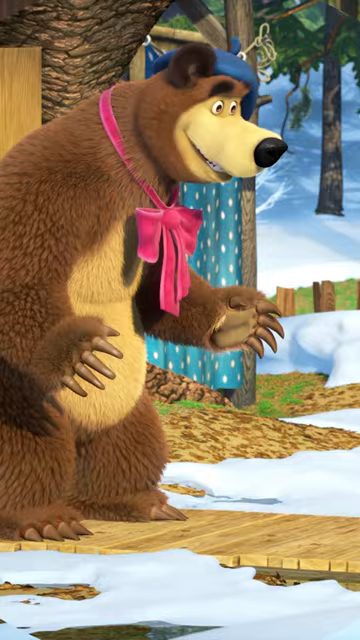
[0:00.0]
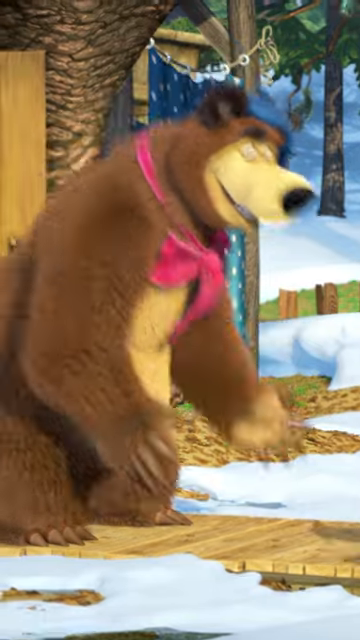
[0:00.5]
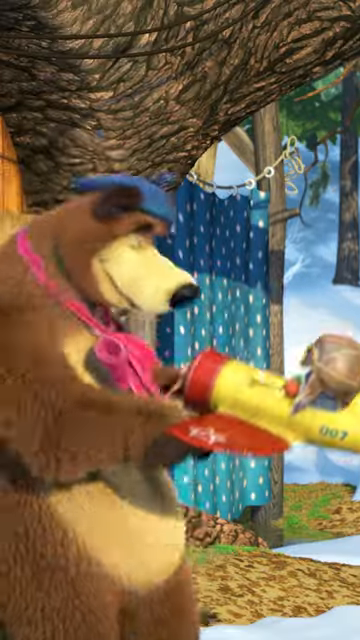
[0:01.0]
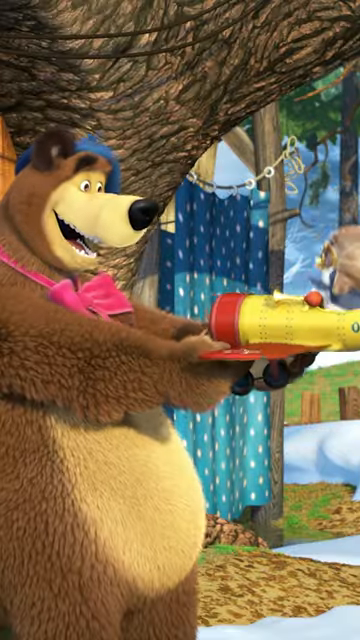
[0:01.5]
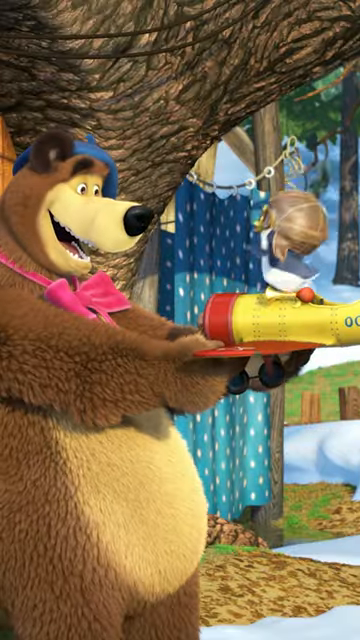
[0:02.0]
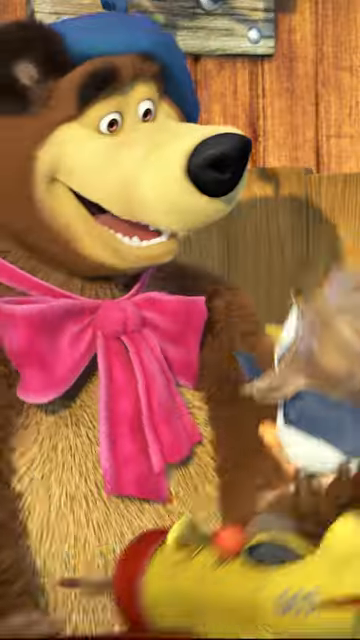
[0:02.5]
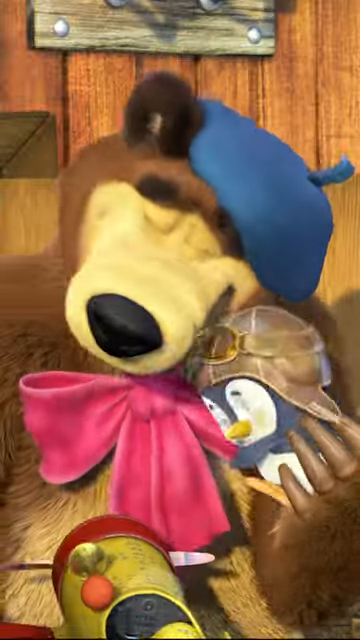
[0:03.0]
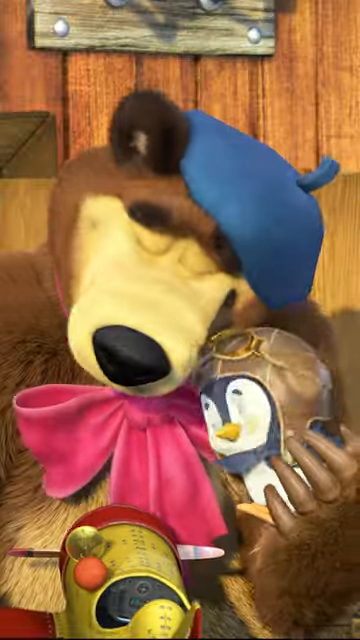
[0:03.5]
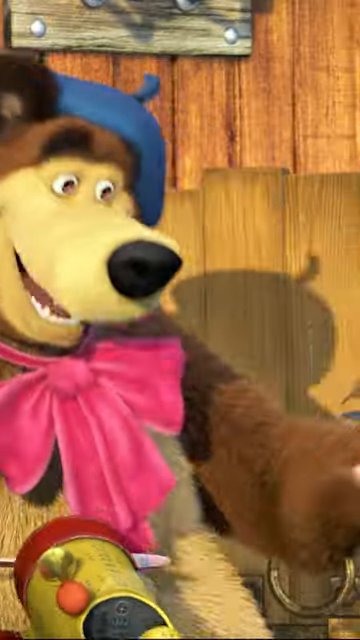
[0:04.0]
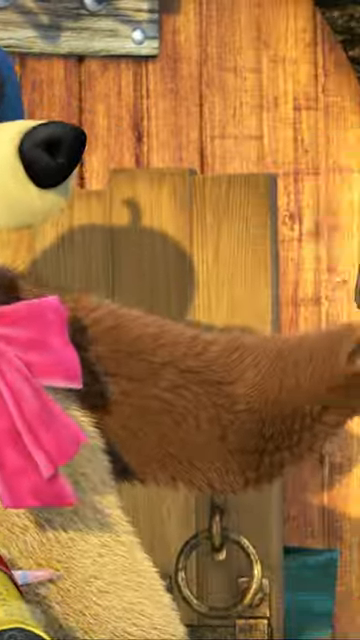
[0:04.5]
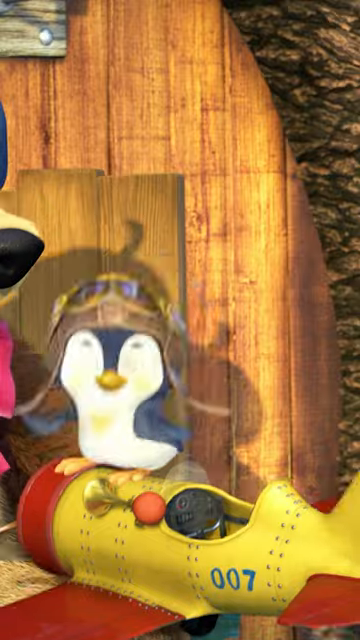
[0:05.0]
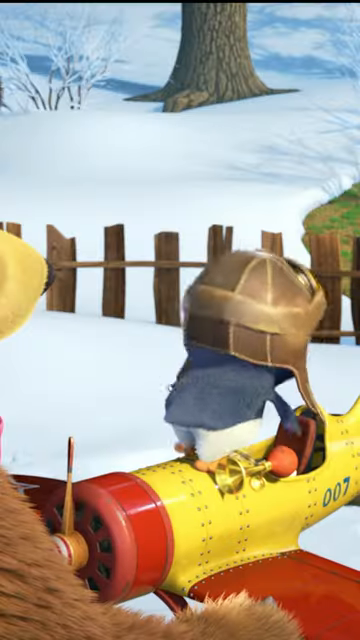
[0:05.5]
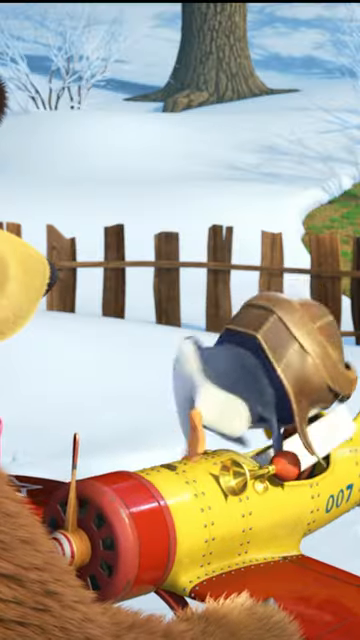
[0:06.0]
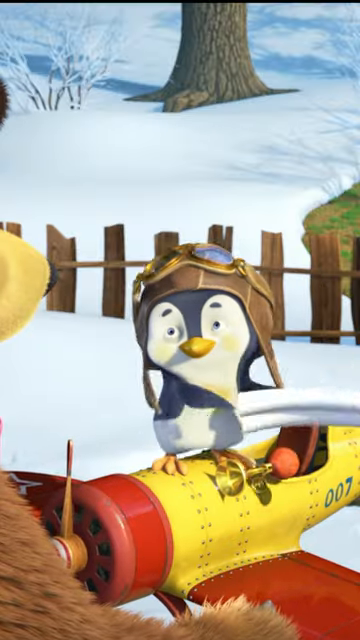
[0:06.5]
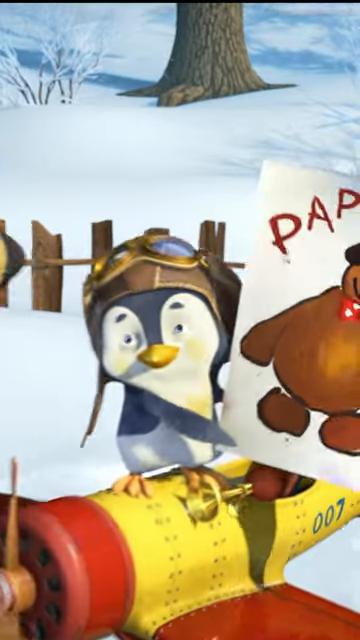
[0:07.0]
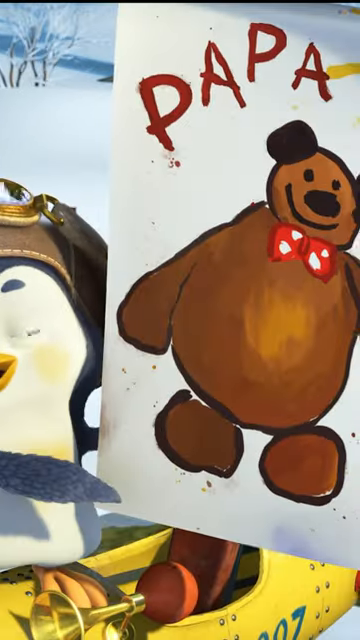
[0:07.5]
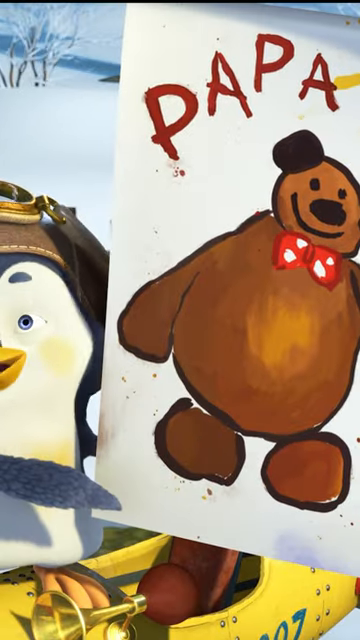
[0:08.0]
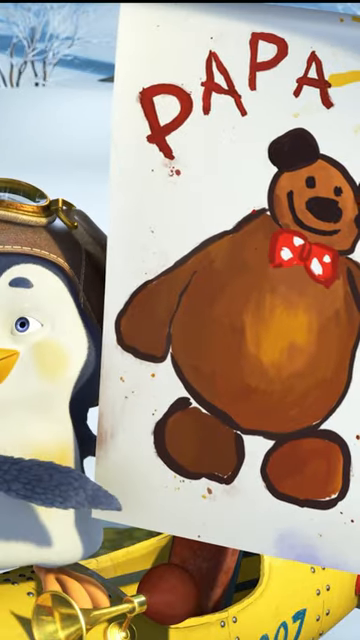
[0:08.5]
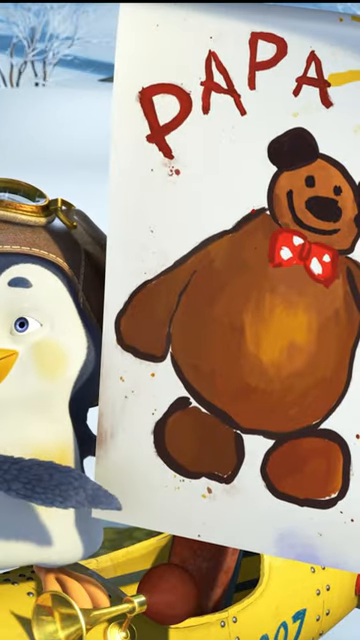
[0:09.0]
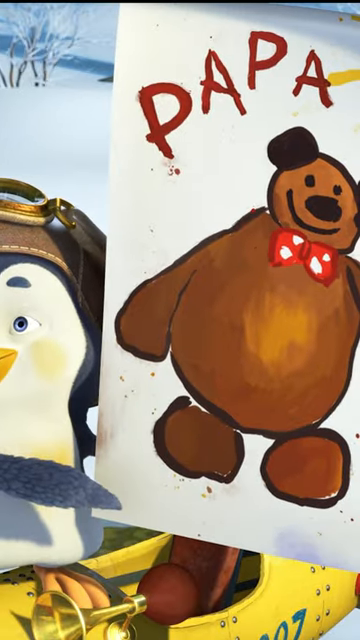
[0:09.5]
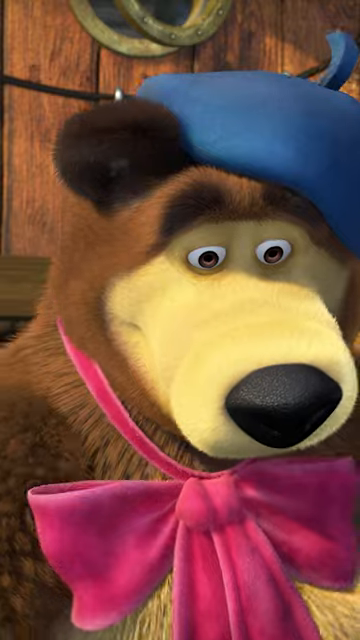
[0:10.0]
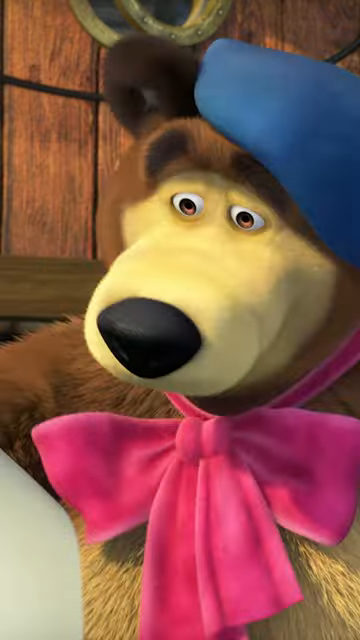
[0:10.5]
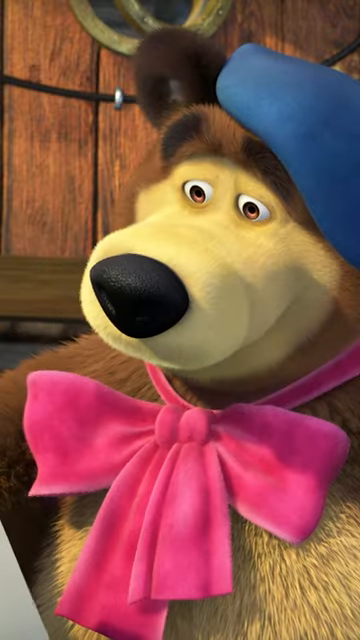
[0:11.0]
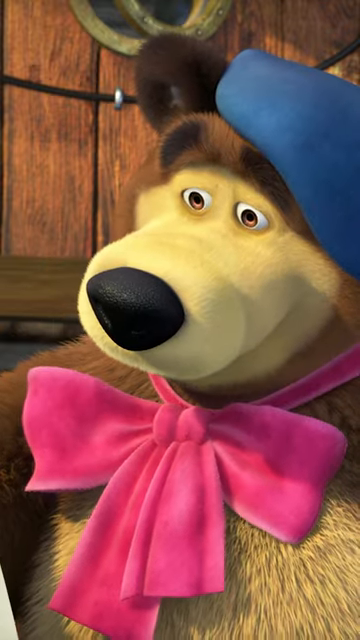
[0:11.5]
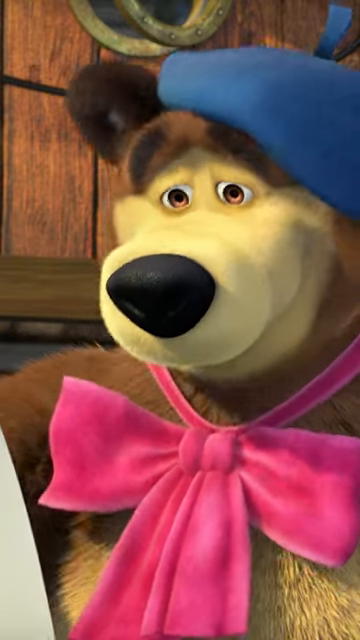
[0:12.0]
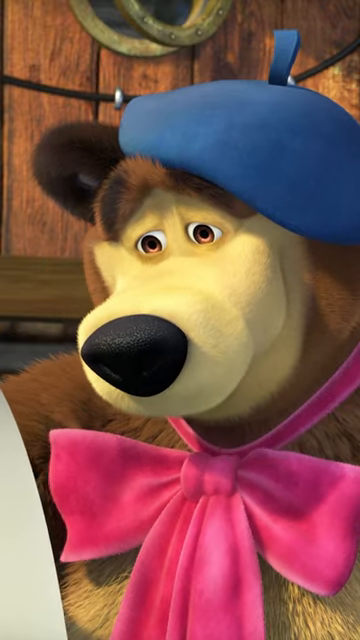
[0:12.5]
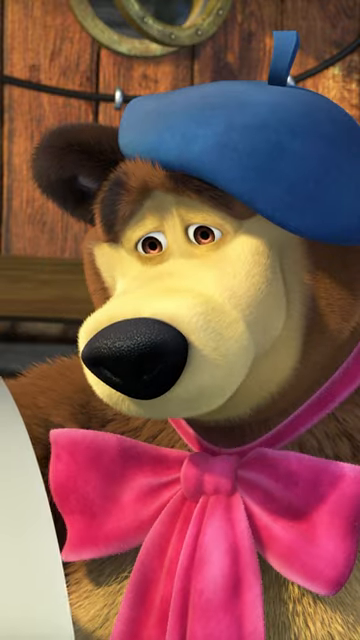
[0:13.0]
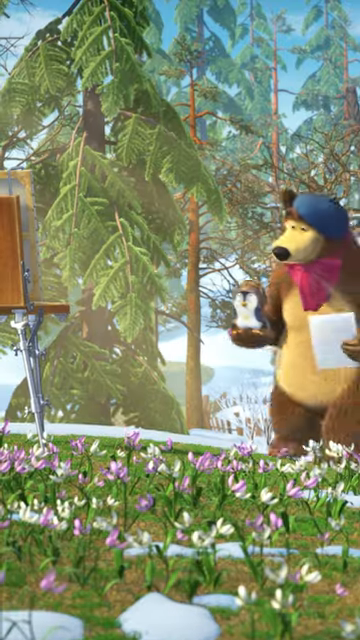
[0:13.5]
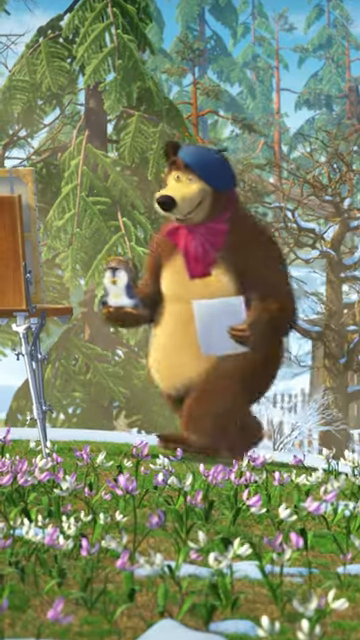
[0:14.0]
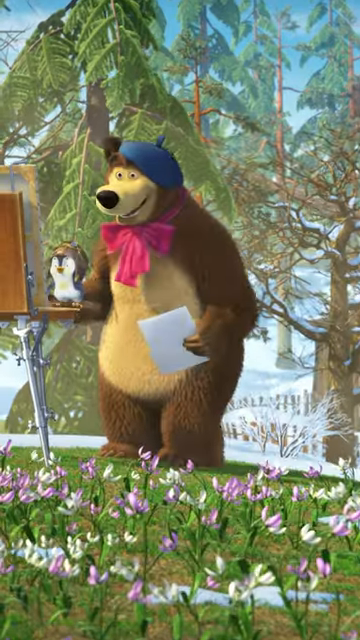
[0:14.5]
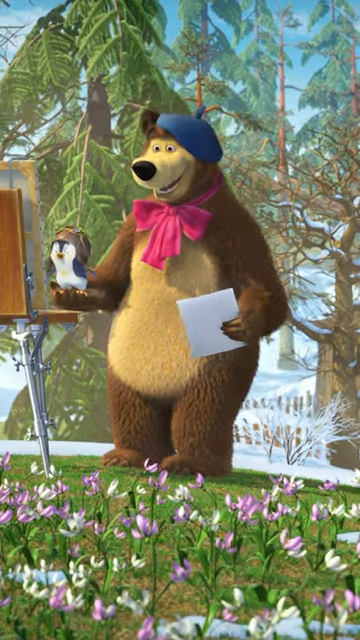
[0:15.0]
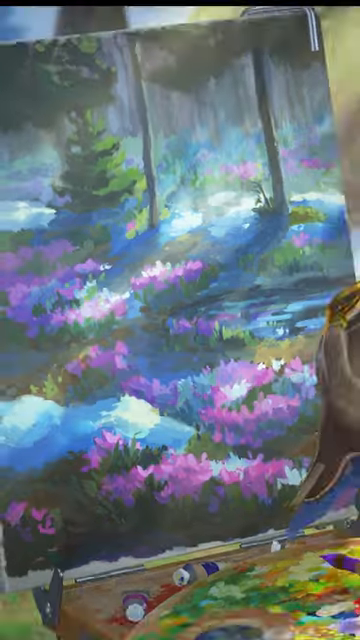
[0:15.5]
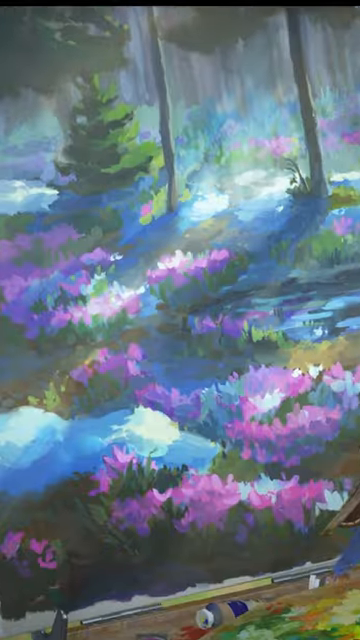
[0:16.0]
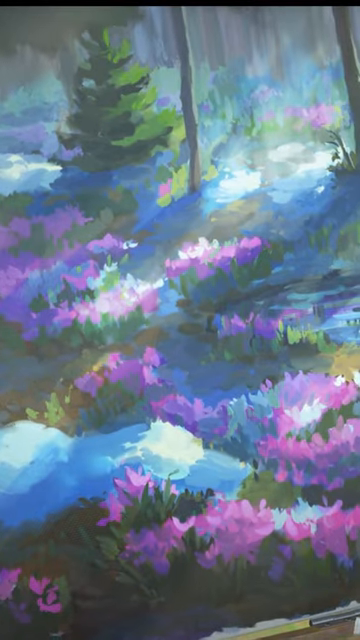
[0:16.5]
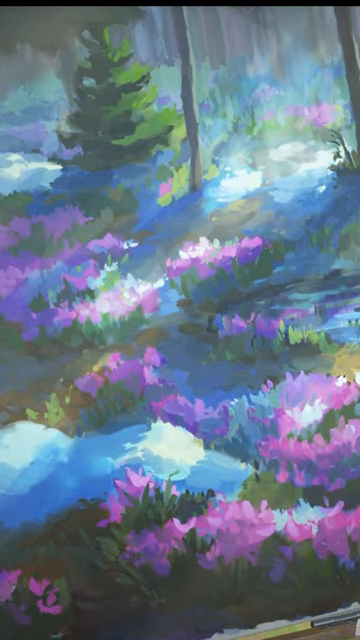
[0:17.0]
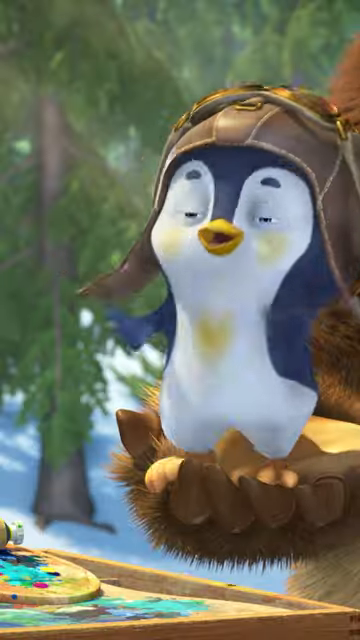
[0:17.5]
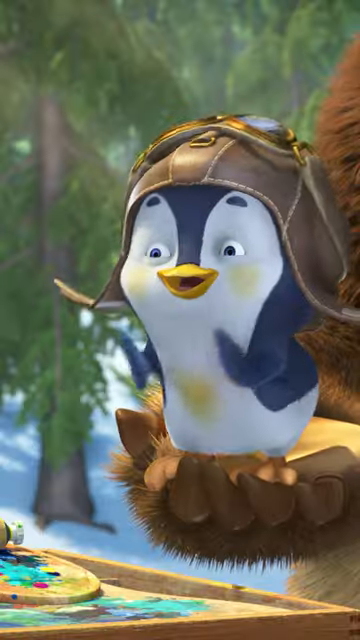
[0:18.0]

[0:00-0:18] A bear wearing what looks like a pink bowtie around his neck and a blue hat picks up a yellow and red toy airplane with a little cute creature inside it. The creature is something like a blue and white bird with a yellow beak and a pilot hat. The two hug each other, the bear hugging the bird against his cheek, and both are happy. The bird then takes a piece of paper out of the plane and reveals that it says "Papa" and has a drawing of the bear on it; in the drawing the bear wears a red bowtie. The bear looks at the picture and smiles, very happy. He then carries the bird over toward a canvas showing a drawing of some purple flowers, some trees and bushes, and the bird claps and looks very happy.